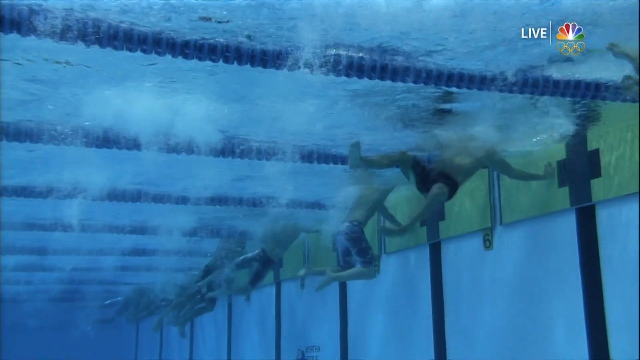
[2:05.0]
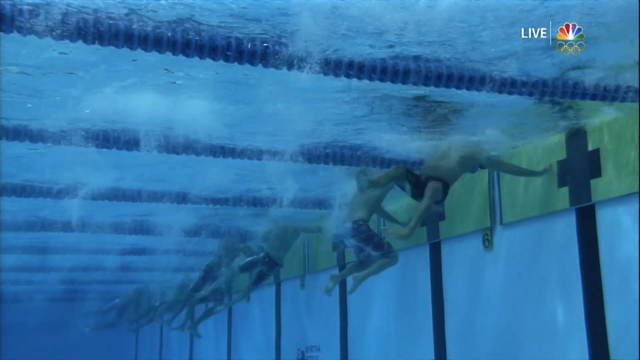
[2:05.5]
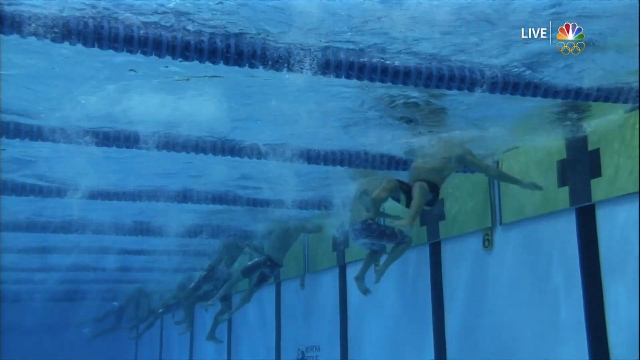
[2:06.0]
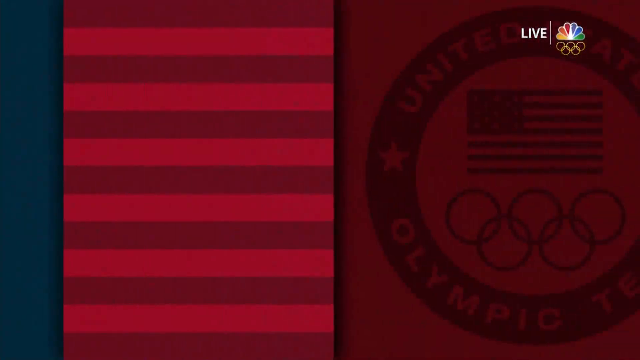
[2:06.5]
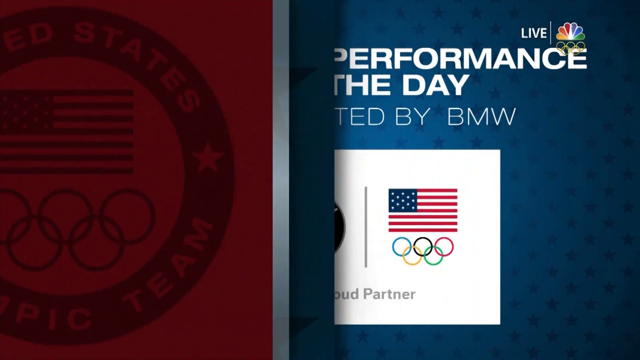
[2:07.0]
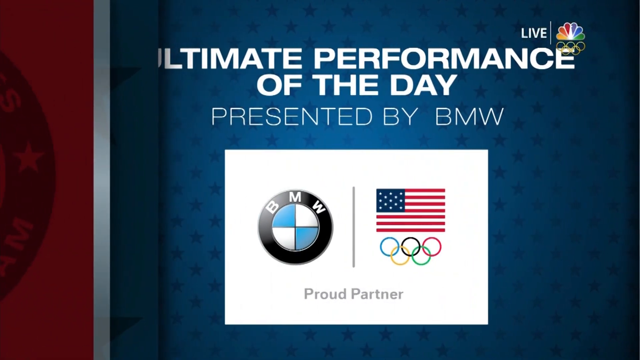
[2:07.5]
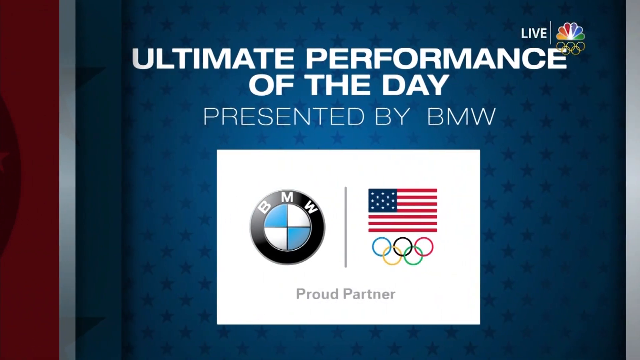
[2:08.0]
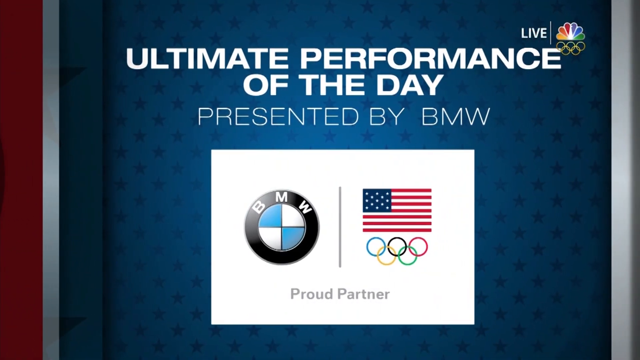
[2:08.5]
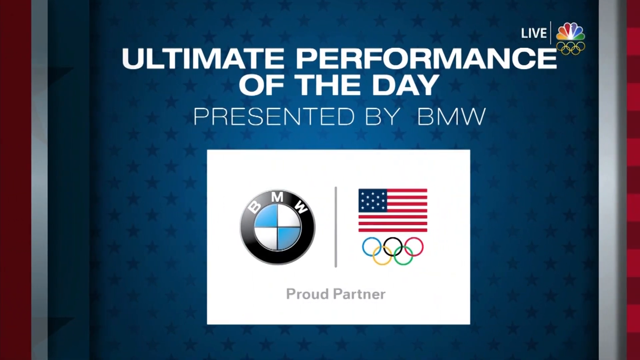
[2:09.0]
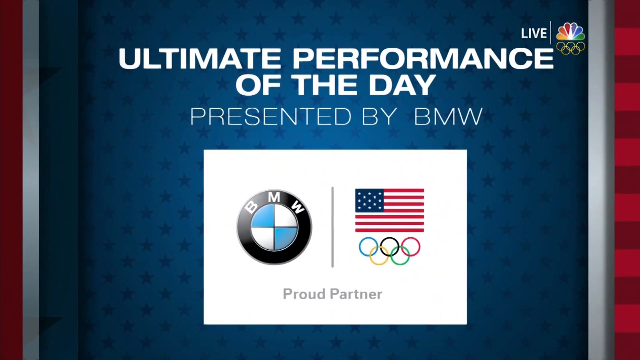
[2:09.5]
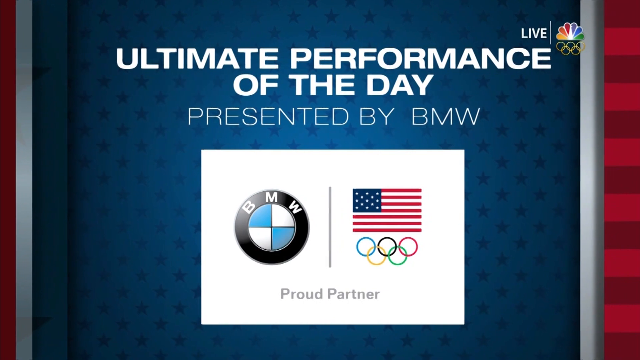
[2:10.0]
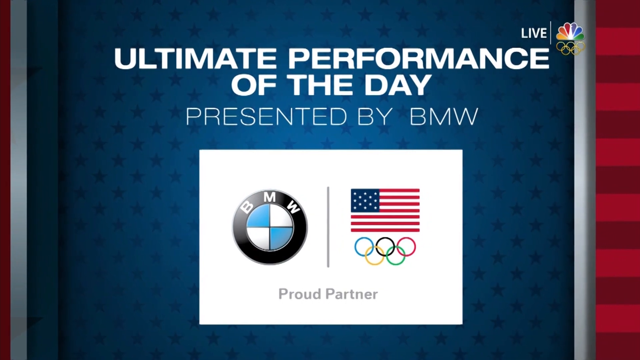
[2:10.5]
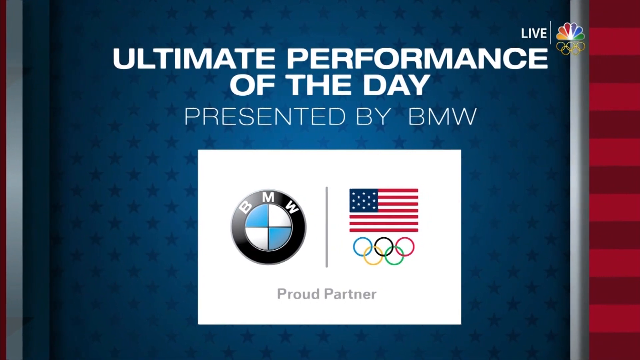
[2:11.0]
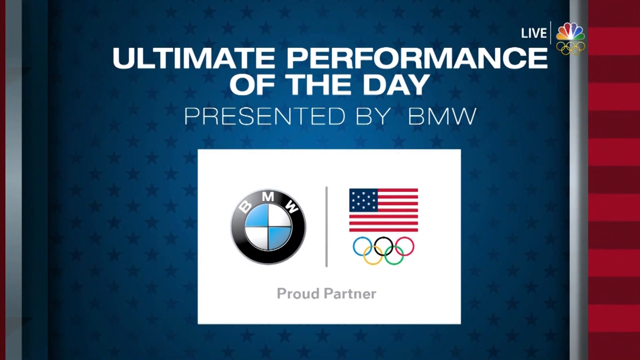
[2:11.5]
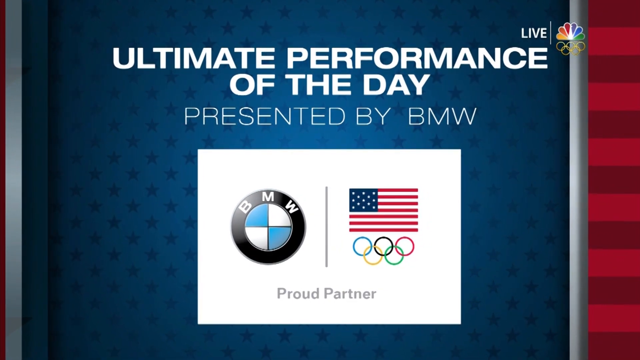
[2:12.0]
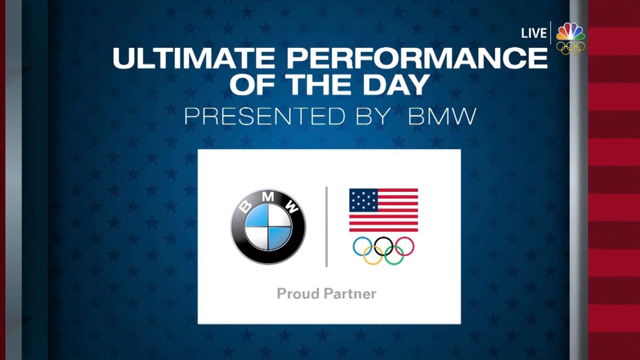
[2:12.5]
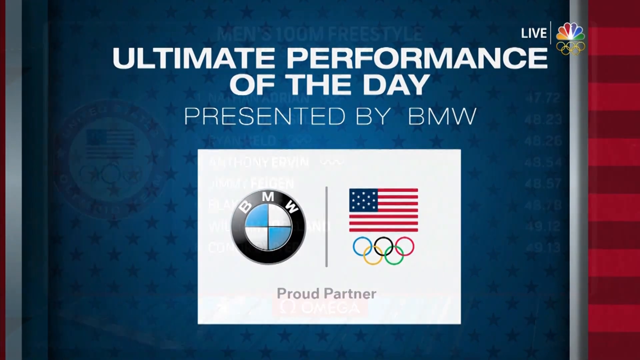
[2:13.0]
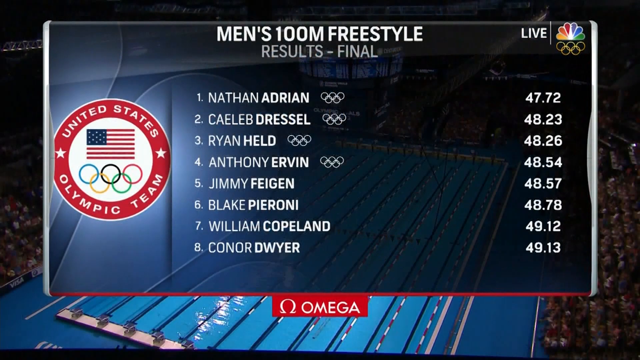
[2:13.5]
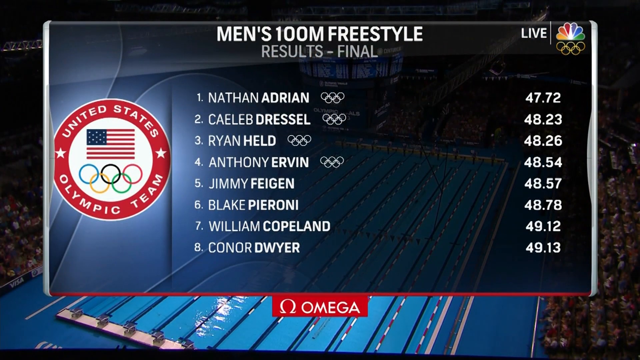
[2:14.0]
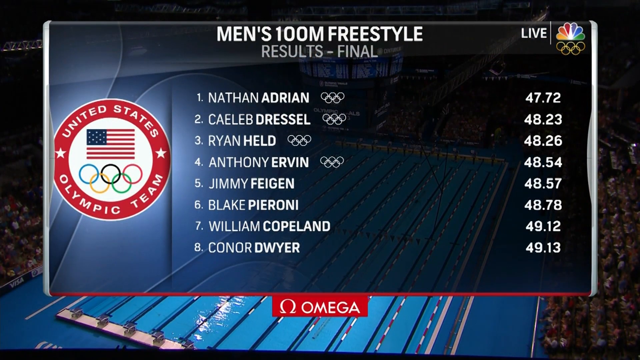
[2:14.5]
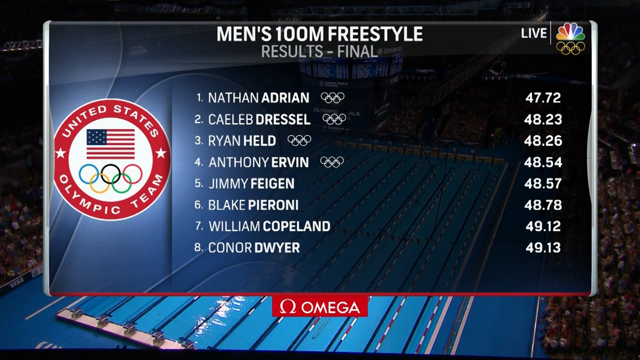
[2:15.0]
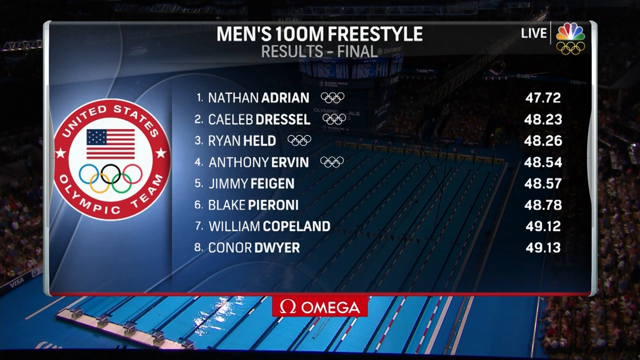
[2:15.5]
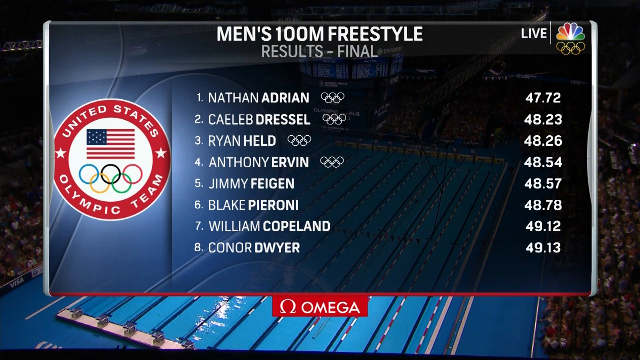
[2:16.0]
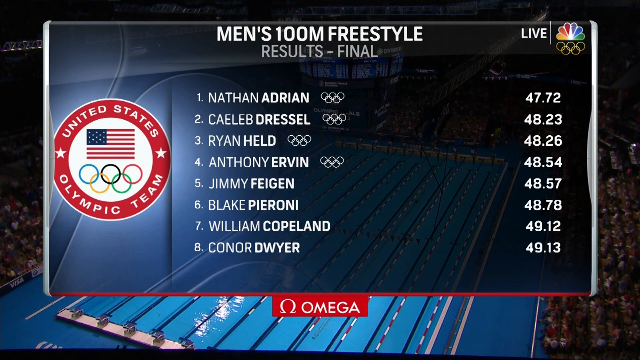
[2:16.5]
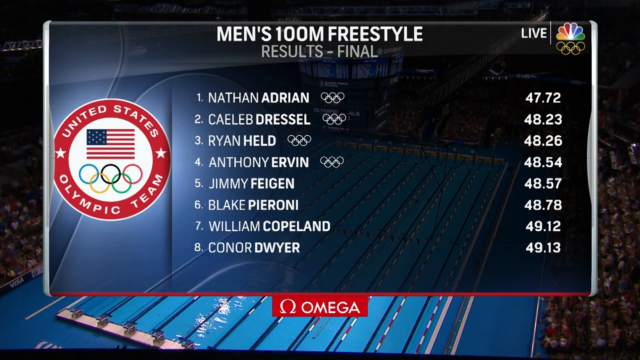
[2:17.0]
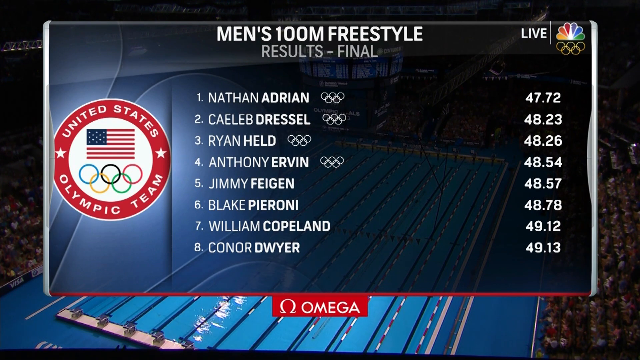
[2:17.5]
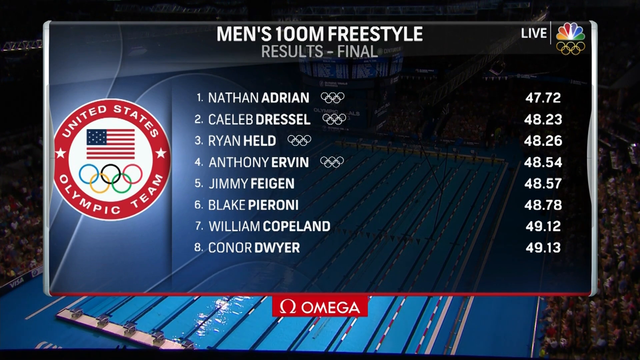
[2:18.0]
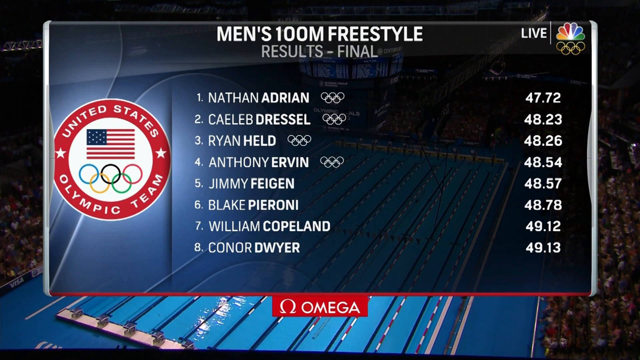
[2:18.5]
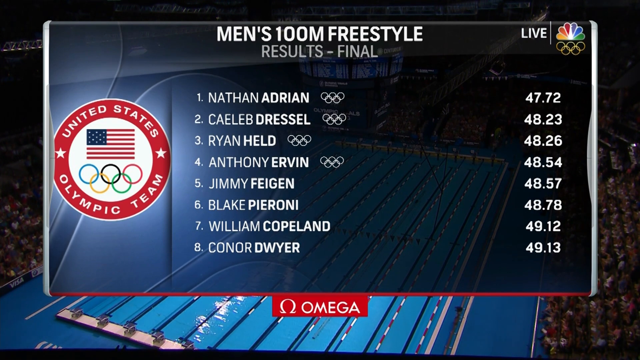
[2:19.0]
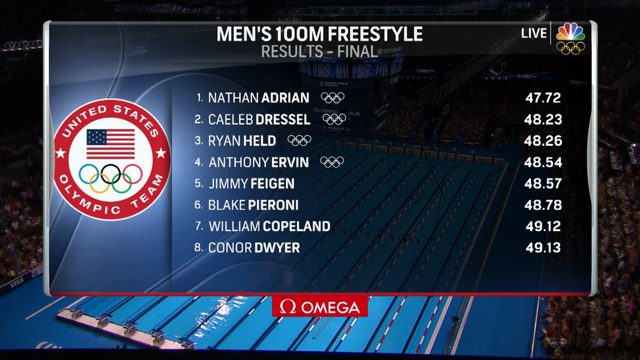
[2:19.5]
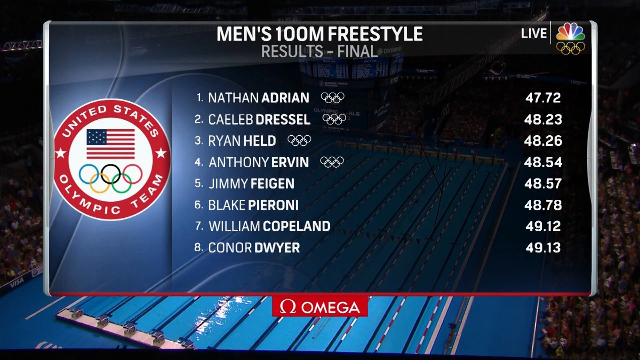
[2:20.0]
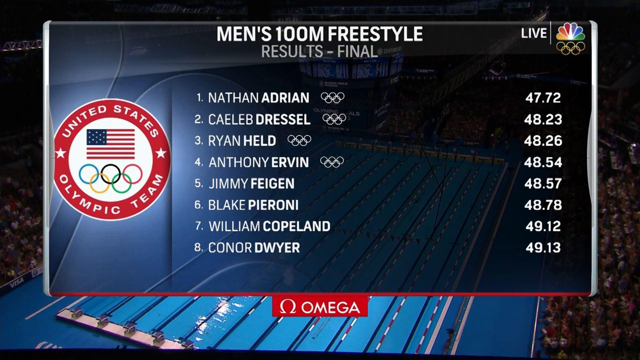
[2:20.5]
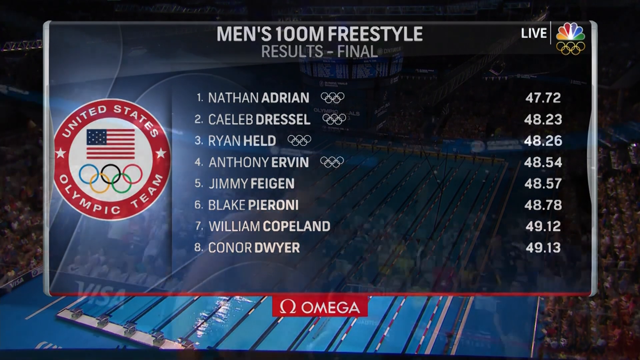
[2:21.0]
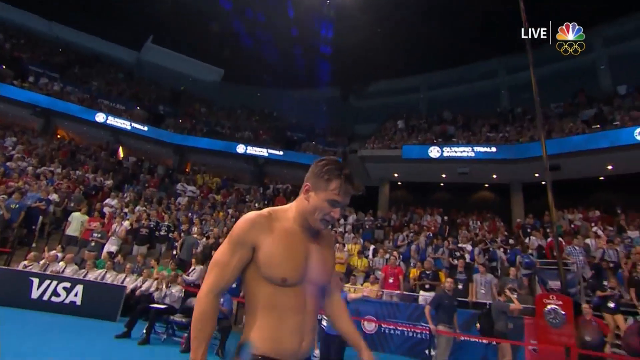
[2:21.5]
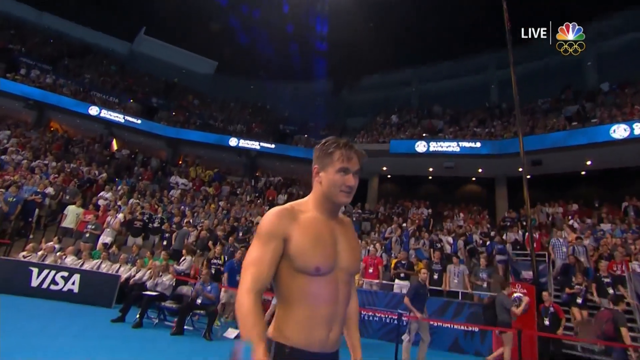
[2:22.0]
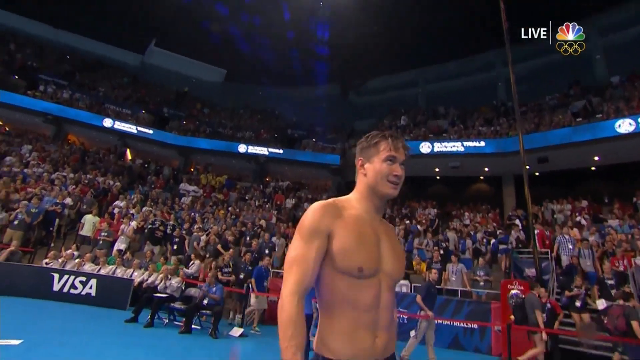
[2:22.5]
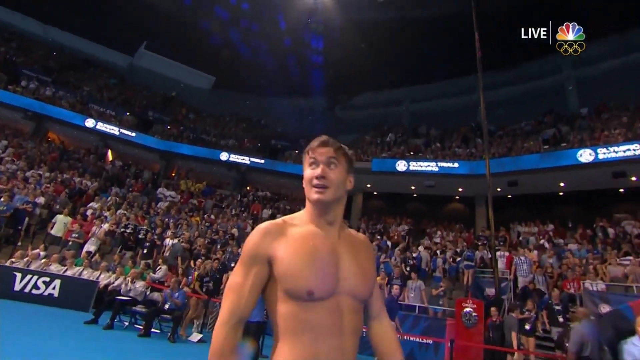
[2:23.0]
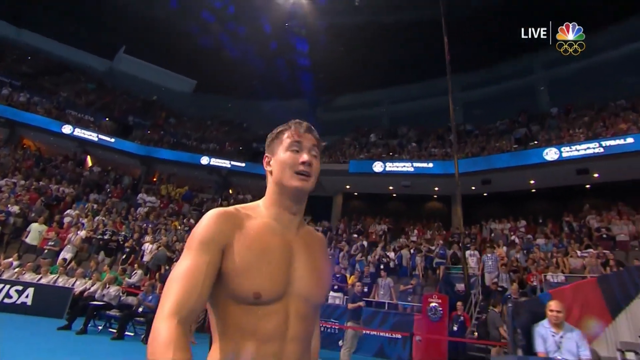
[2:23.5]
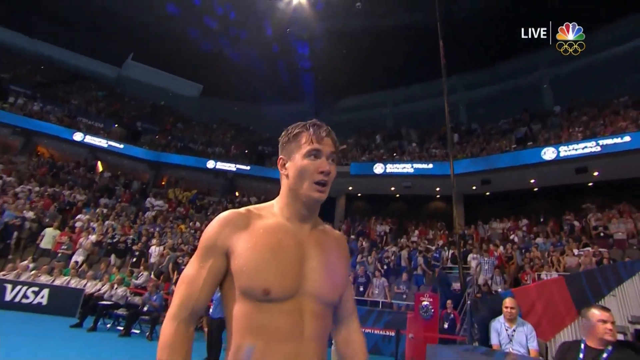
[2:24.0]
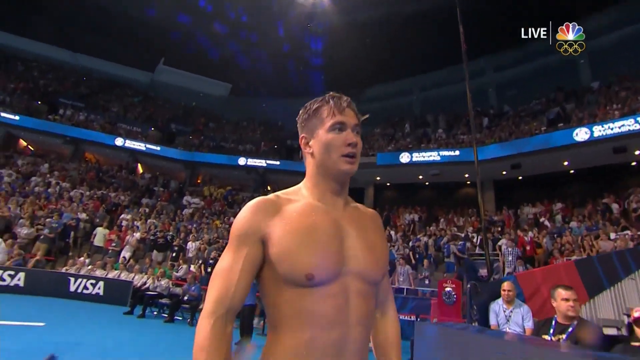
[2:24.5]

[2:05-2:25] An underwater view shows the swimmers. Next, the swimming event sponsor display appears: the sponsor is BMW, and white capital text against a blue backdrop with lots of little dark blue stars reads "ultimate performance of the day presented by BMW". Below that, the BMW logo on the left and the American flag and Olympic rings on the right appear on a white rectangular backdrop, with "proud partner" written below in grey. The sponsor display stays on for a while. Then the results of the event appear in white text against a backdrop image of the swimming pool and spectators, listing the swimmers from number 1 to 8. Above it, white text reads "men's 100m freestyle results final", with Nathan Adrian in the number 1 position. The results stay on screen. Next, the winner walks jubilantly in his swim trunks, with spectators watching in the background.